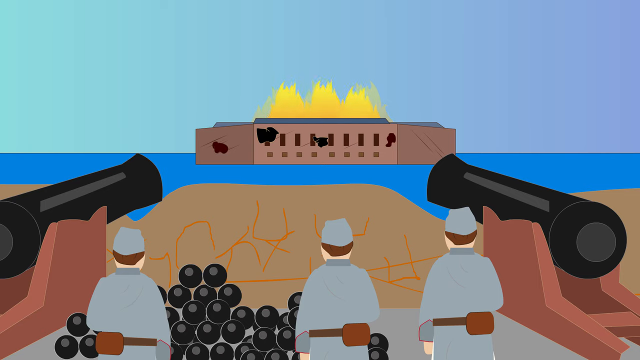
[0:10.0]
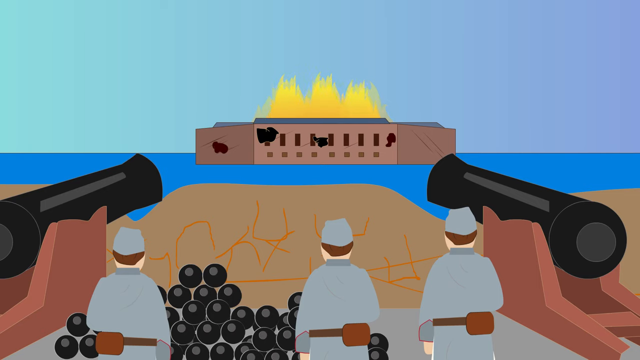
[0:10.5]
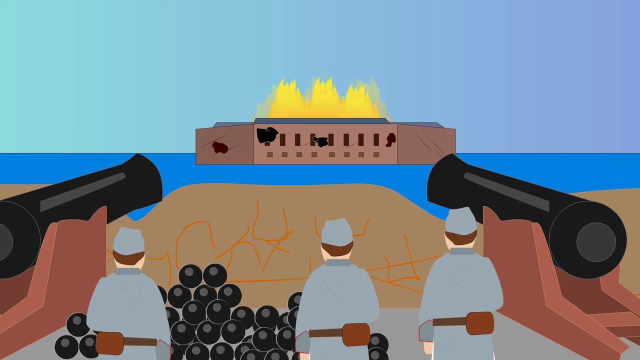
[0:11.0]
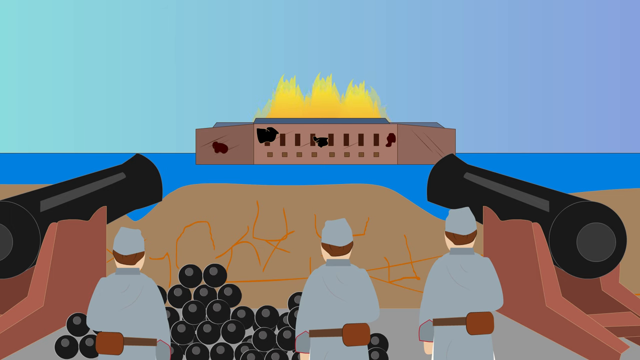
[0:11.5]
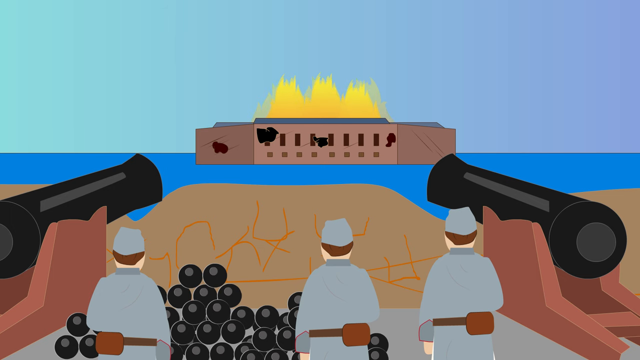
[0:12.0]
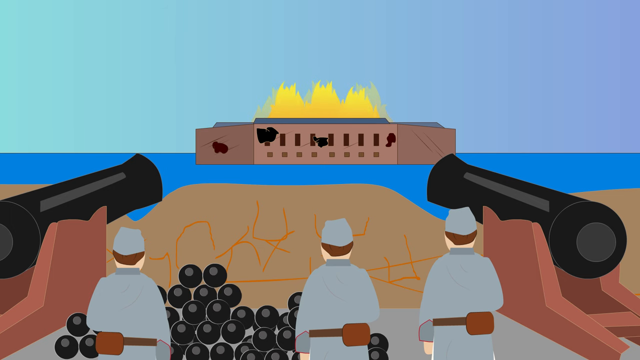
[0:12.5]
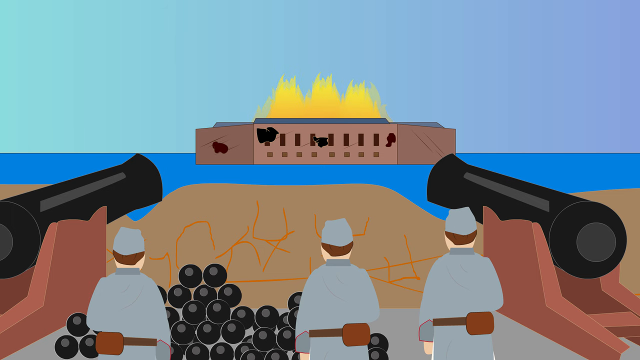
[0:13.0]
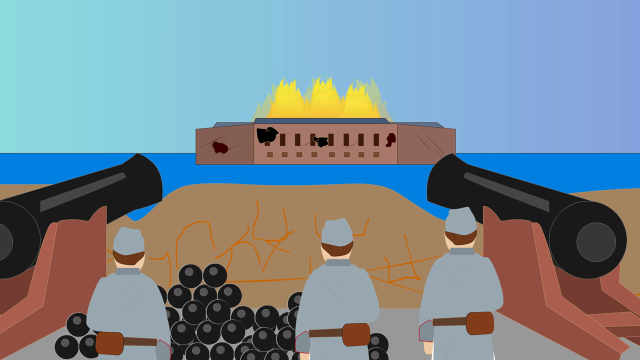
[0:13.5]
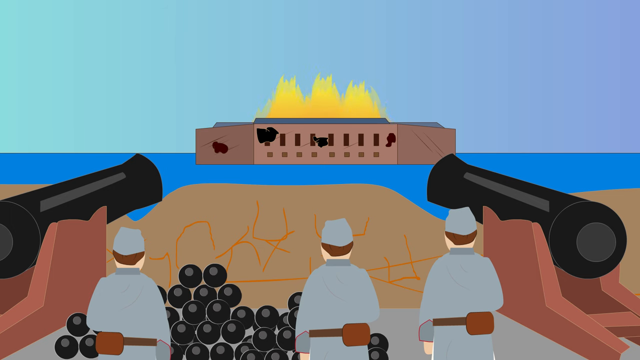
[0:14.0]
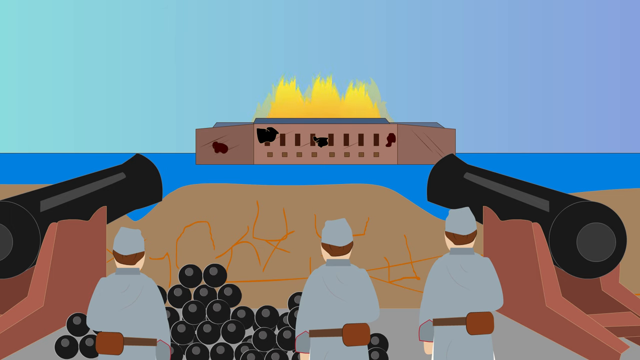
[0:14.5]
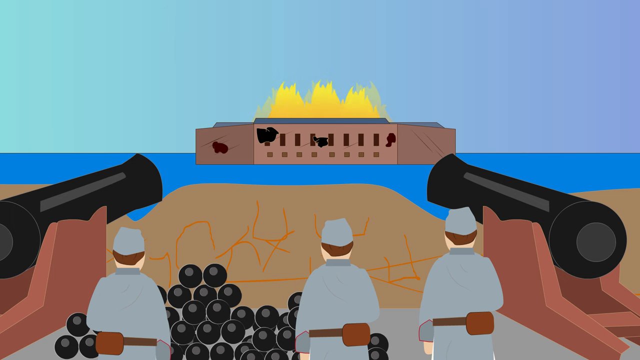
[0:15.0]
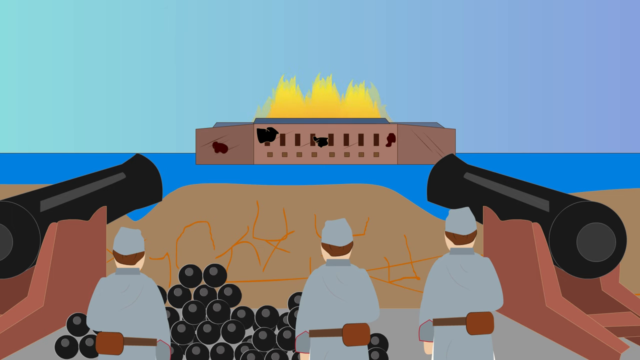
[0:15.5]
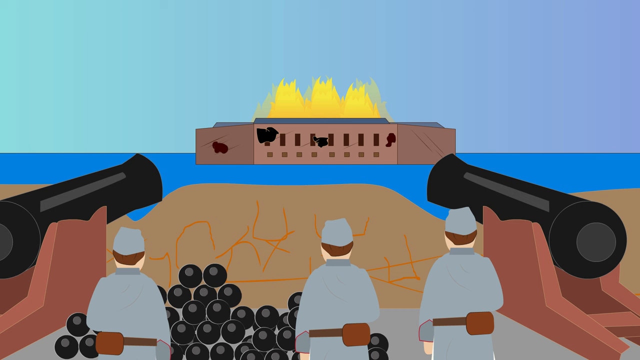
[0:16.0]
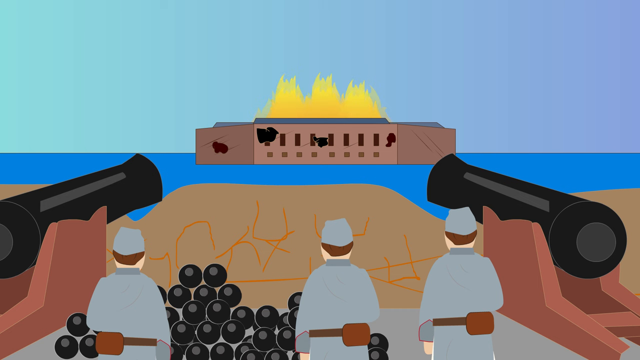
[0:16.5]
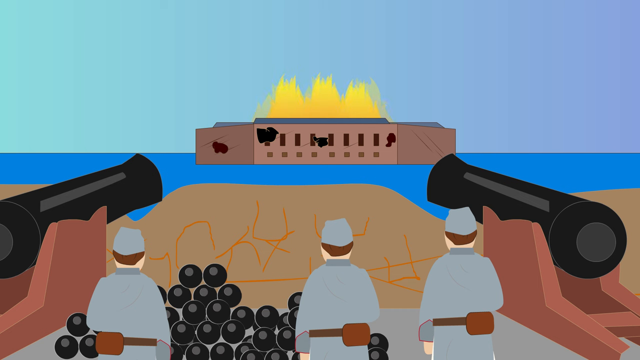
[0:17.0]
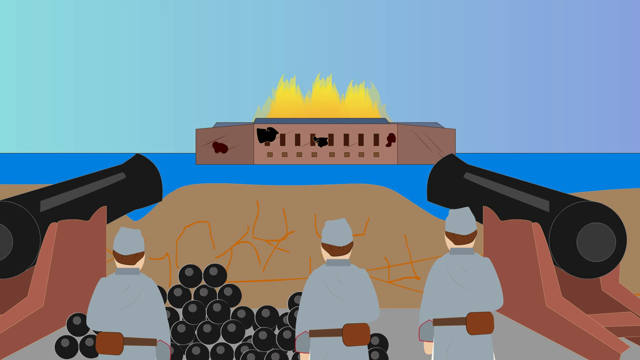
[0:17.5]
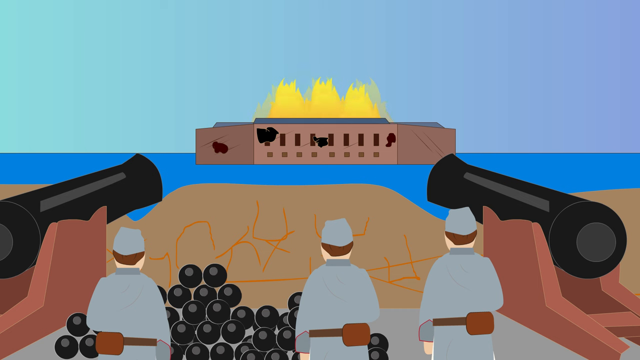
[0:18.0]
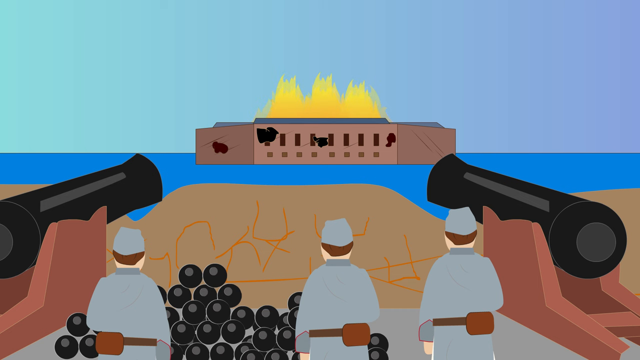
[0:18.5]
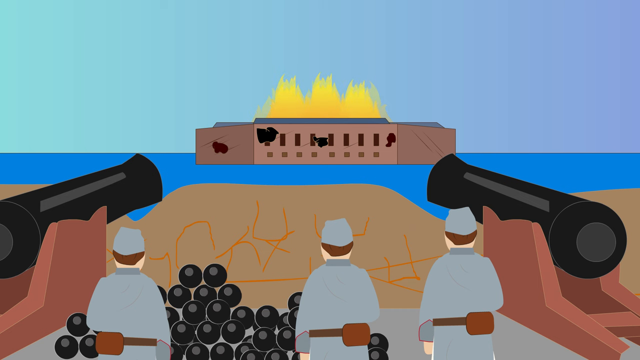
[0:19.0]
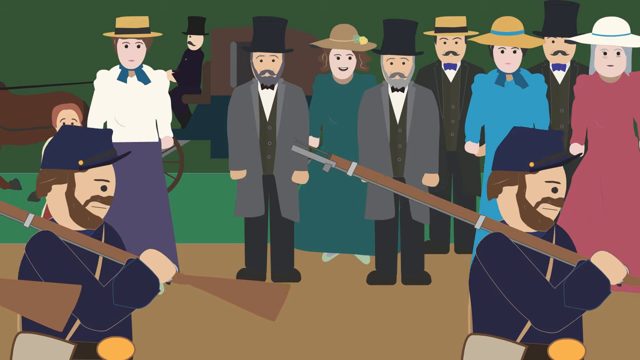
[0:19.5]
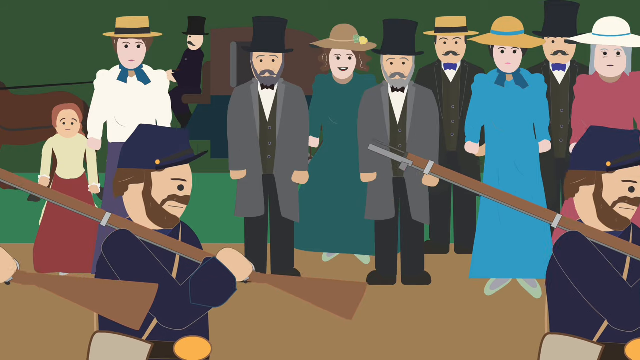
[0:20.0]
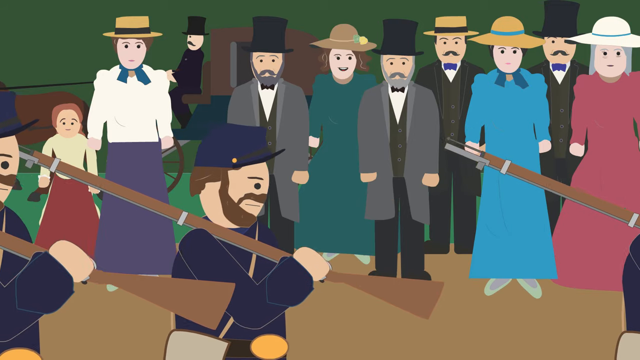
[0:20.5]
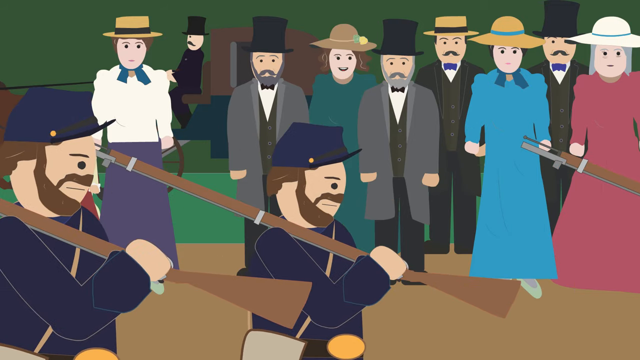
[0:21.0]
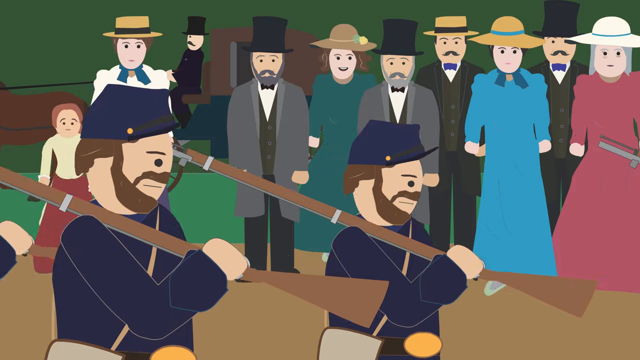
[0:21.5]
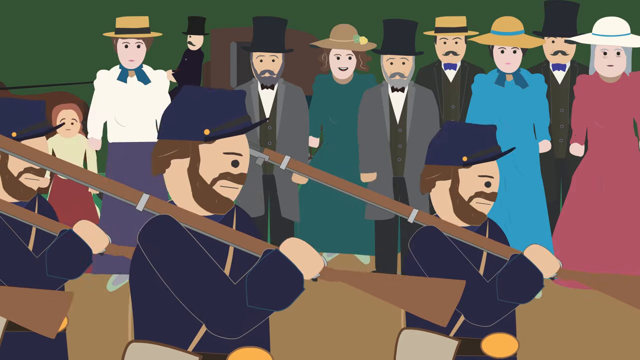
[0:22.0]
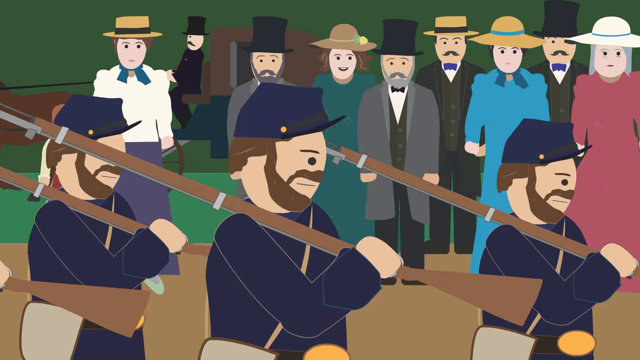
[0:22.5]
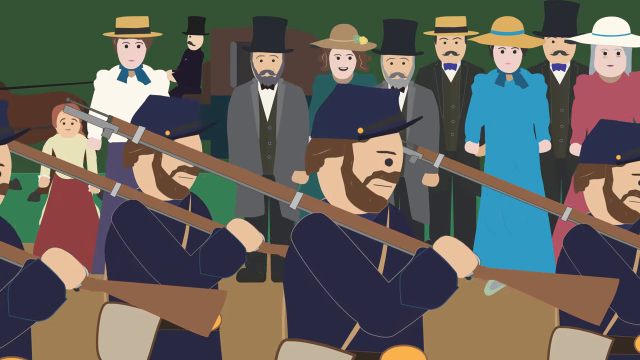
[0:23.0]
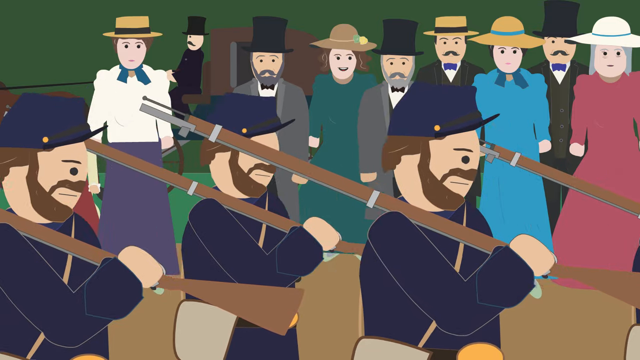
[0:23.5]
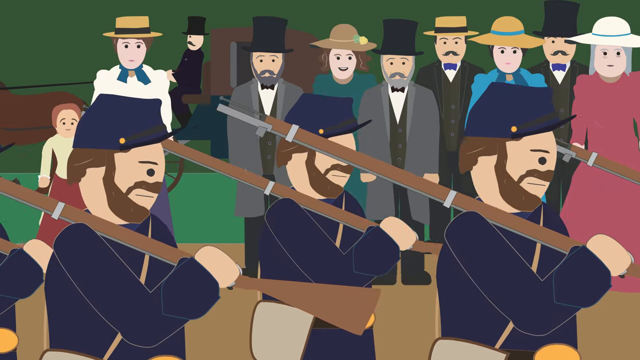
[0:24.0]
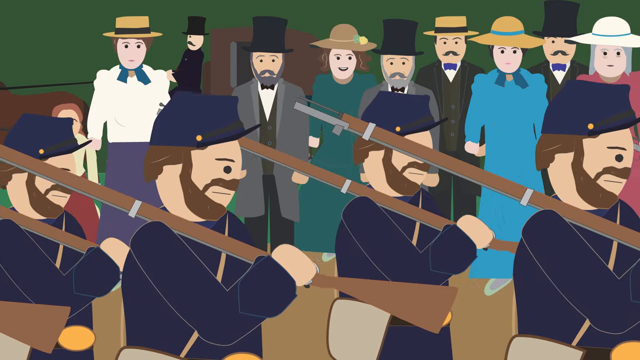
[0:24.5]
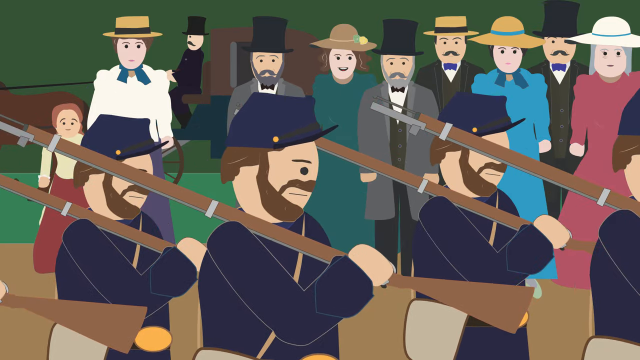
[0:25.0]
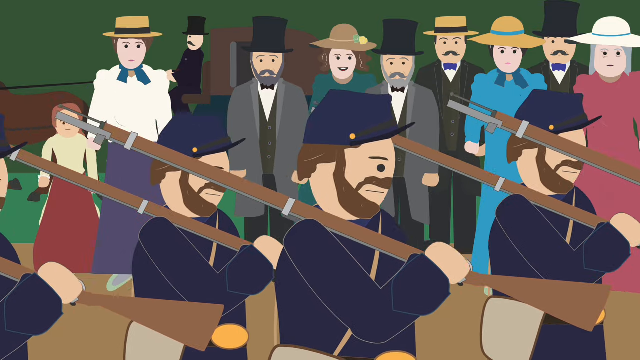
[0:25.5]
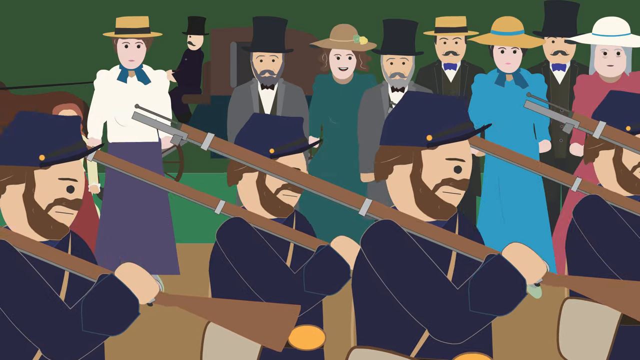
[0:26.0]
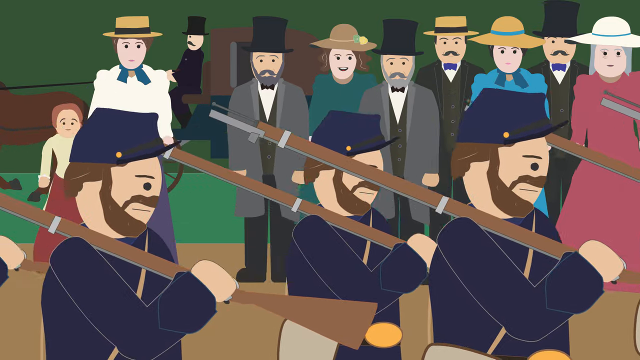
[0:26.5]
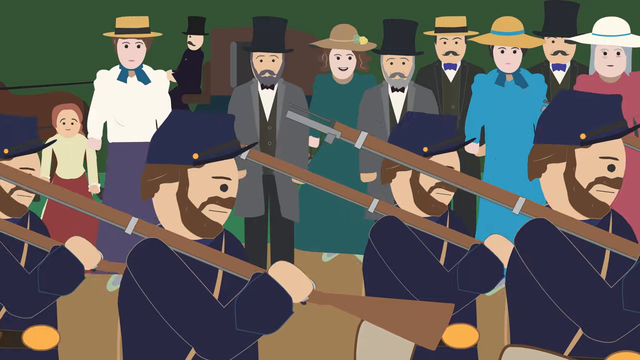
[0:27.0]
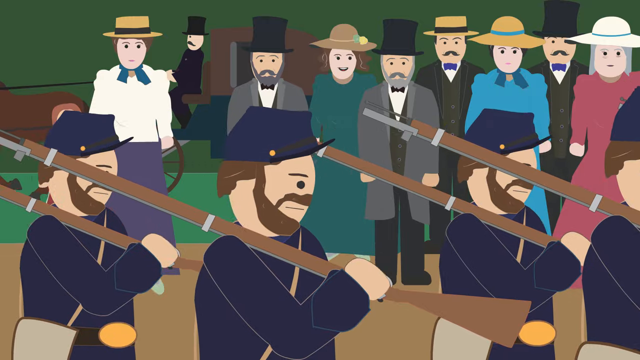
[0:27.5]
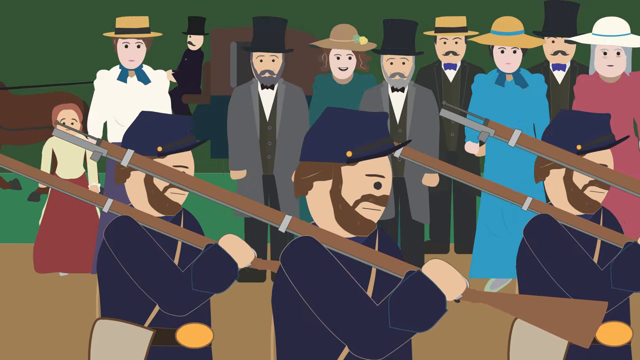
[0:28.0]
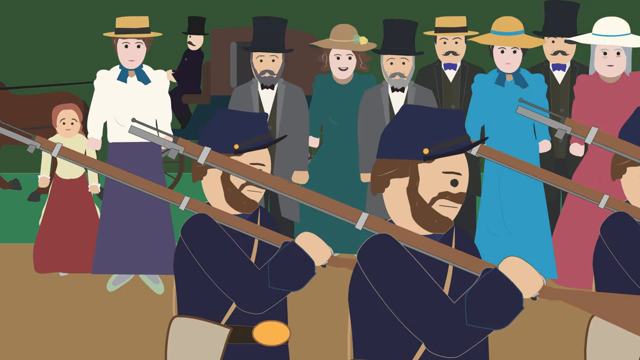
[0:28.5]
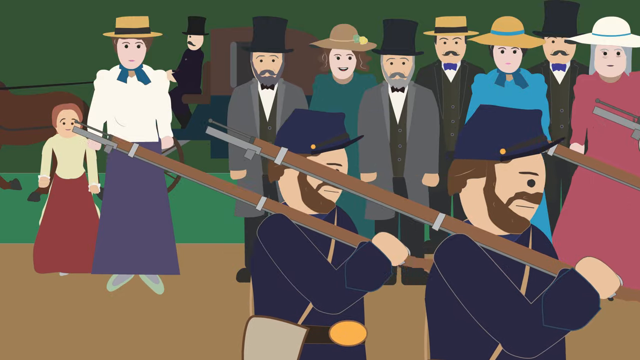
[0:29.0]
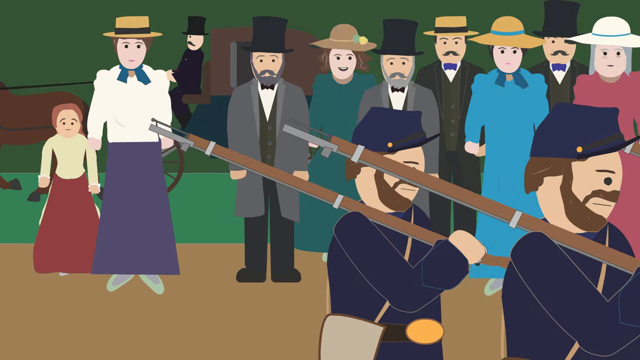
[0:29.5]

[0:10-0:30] American Civil War soldiers fire cannons at a fort across a waterway. In the foreground are three soldiers, with two large cannons on either side of them and black cannonballs lying on the ground in front of them. The next scene shows the soldiers walking down a street in parade-type fashion while civilians stand on the sides of the street watching them march by.